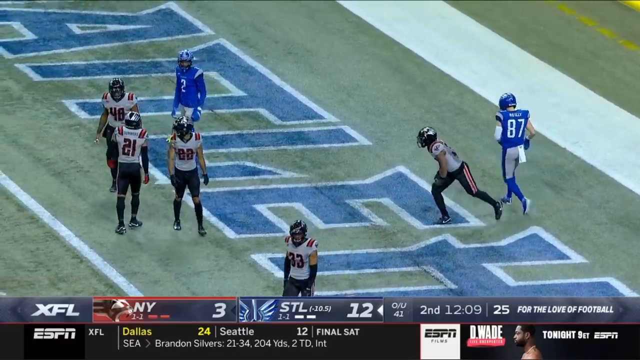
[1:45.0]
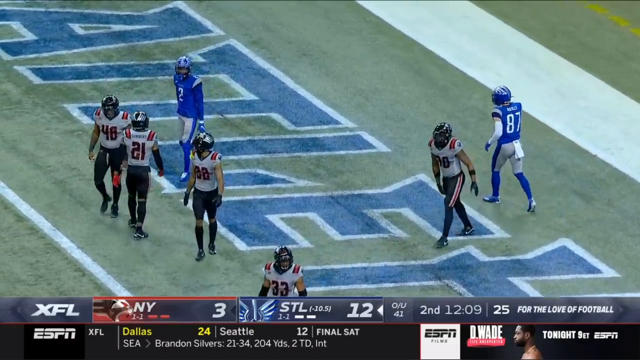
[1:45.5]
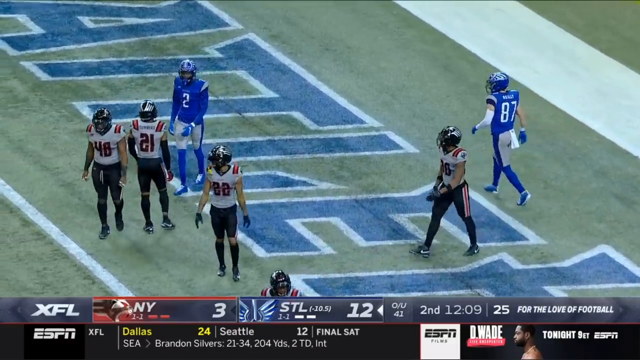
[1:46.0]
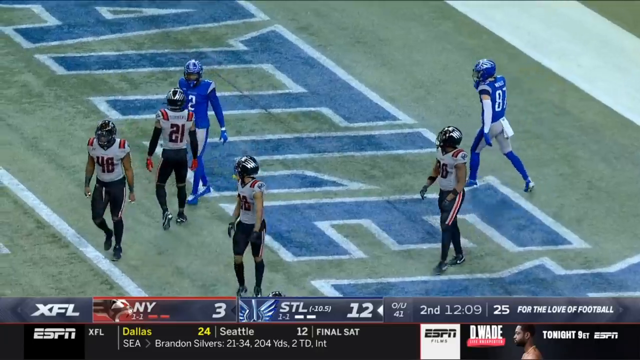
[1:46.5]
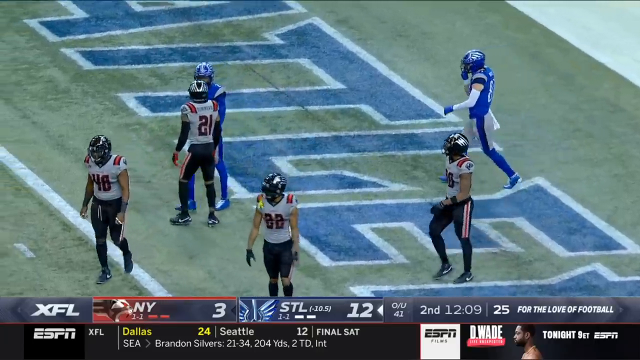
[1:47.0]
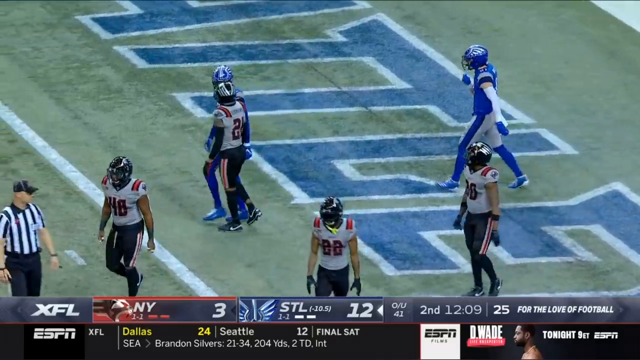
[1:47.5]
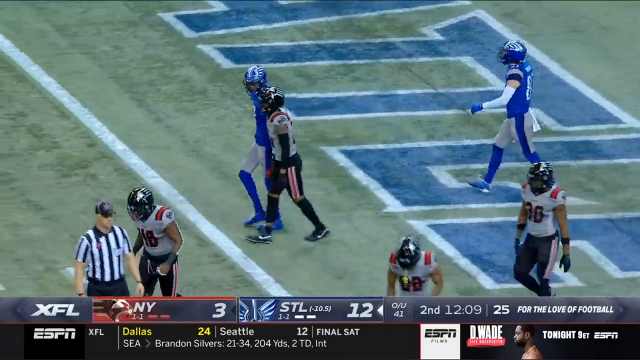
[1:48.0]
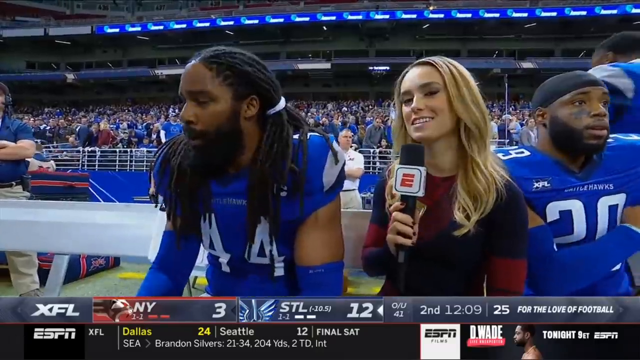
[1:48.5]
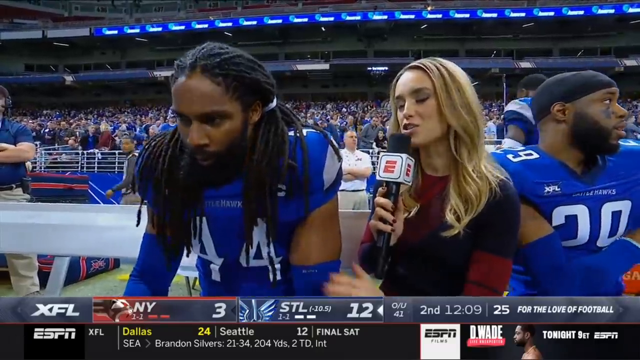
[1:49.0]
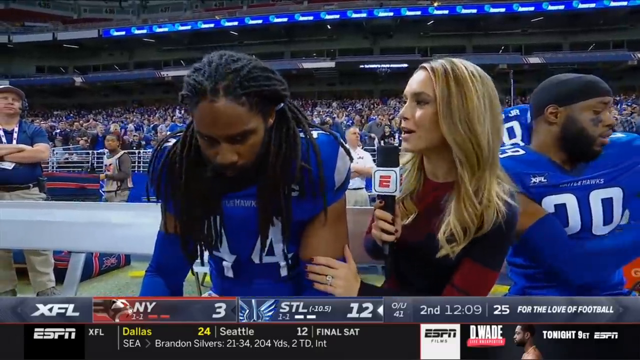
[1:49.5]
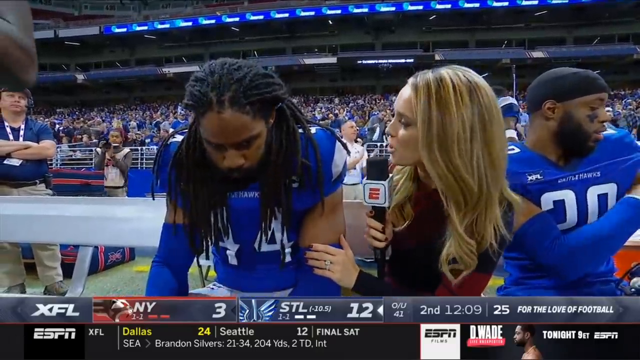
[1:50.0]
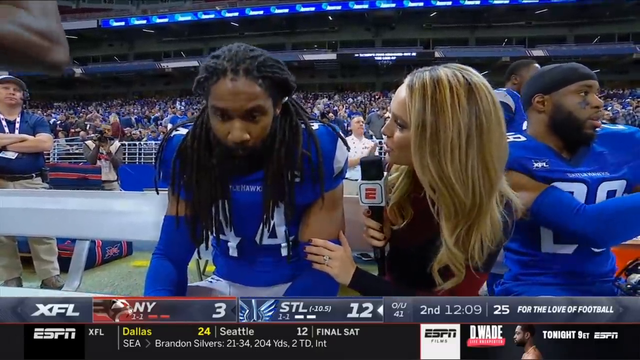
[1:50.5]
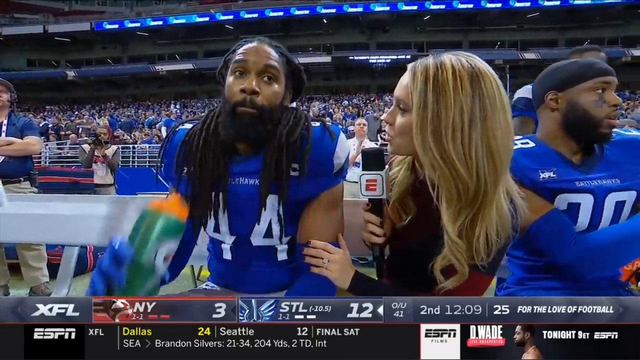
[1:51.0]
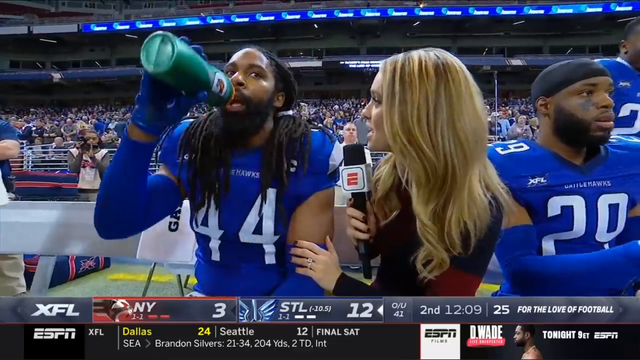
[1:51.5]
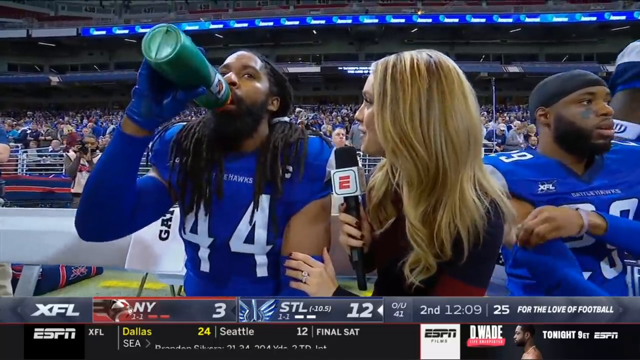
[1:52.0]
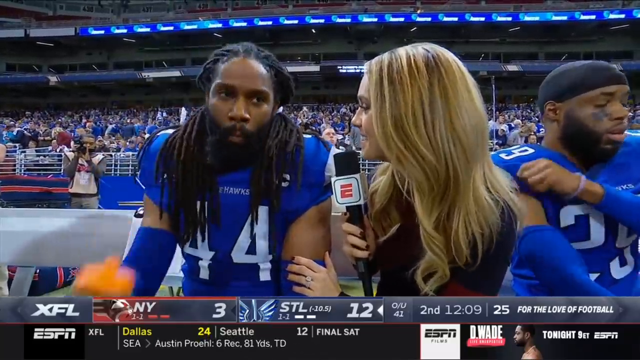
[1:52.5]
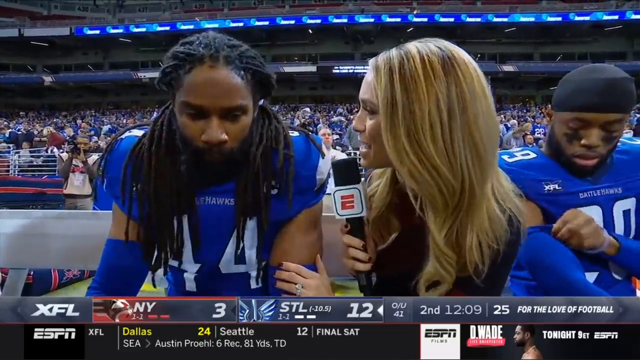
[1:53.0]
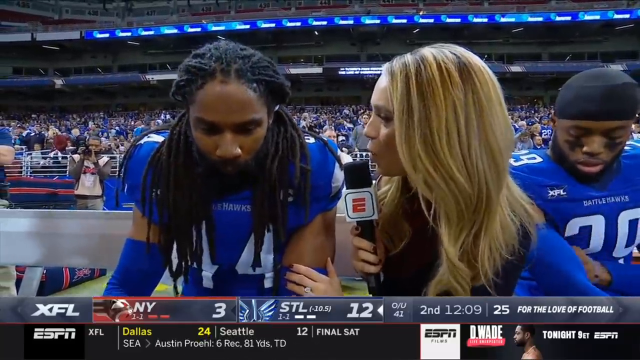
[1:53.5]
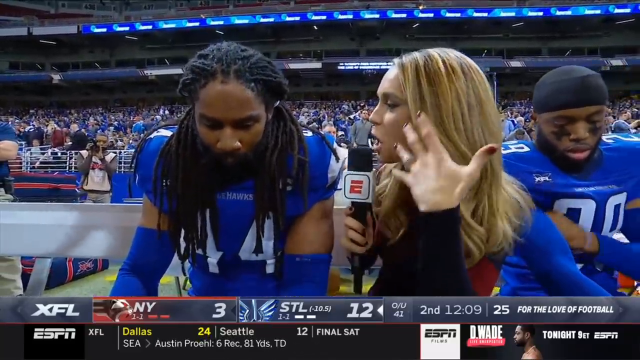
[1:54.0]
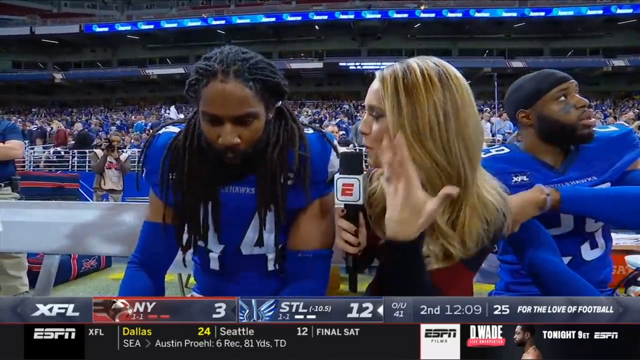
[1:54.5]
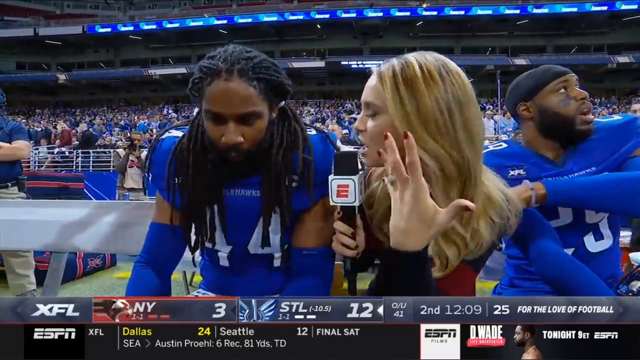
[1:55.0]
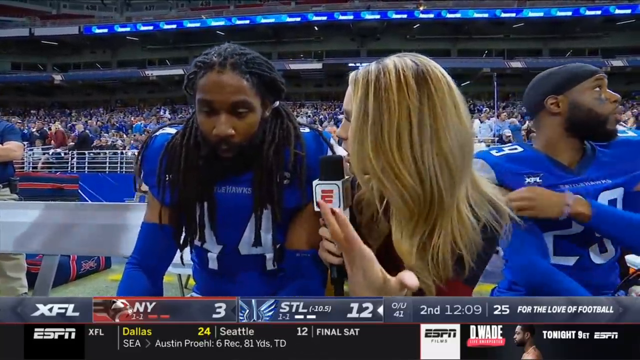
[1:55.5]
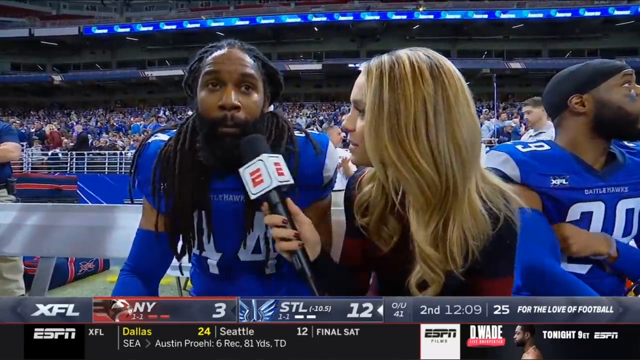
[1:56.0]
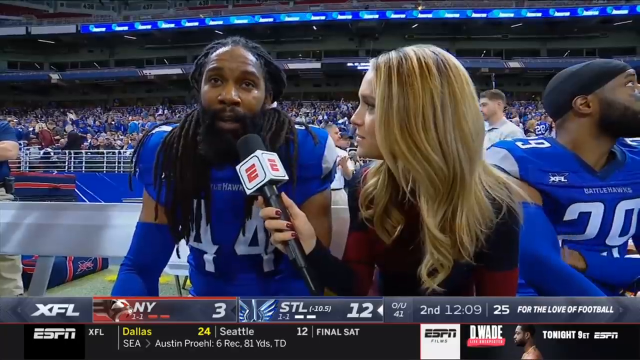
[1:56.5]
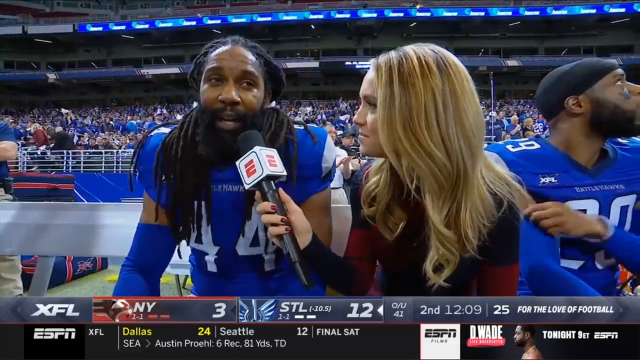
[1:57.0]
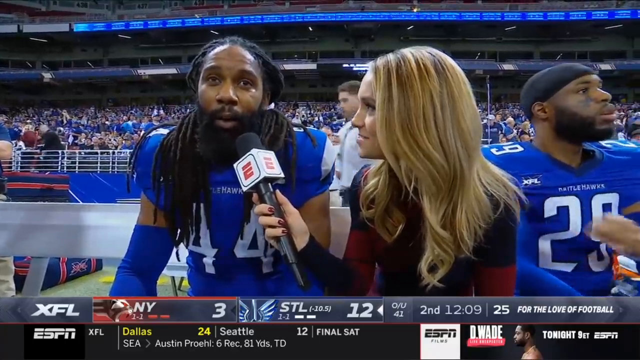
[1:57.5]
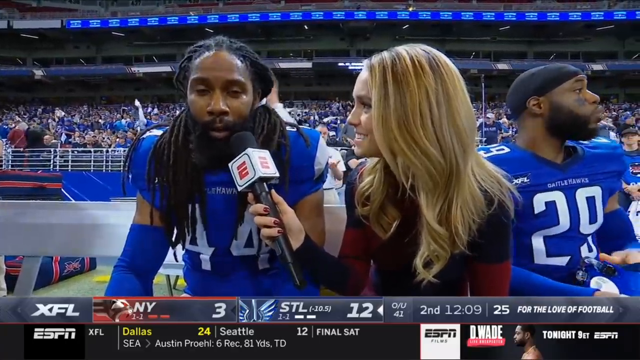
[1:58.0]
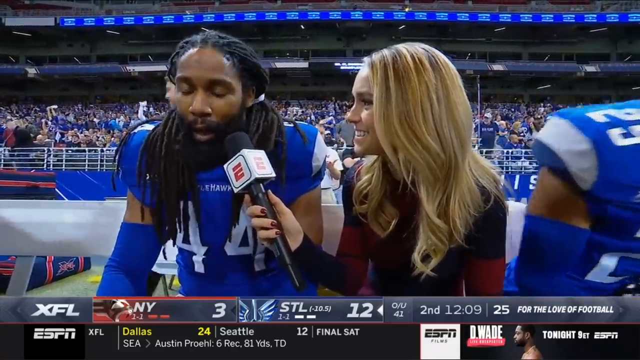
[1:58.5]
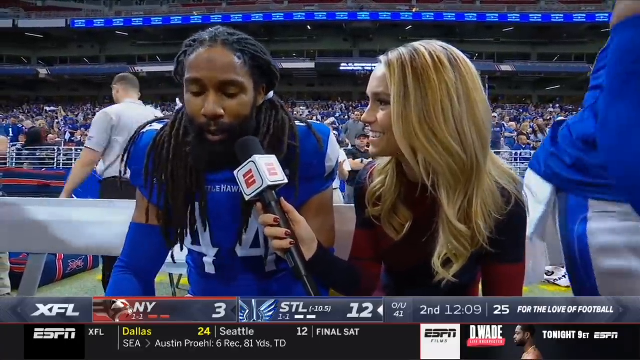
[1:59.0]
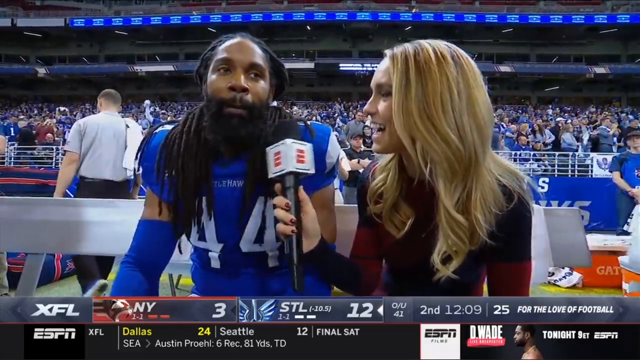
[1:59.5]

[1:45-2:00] An XFL game begins with the team in black, white and red kicking off. The blue and white team, which looks like the Battle Hawks, catches the ball, and a player throws it to another, who runs for a touchdown and scores. The players cheer and jump all over each other, the fans cheer, and fans in hawk outfits cheer in the stands. A sportscaster is shown up in the box of the stadium. The screen splits to show a referee in a black and white striped shirt with the number 81, pointing and talking and then throwing his right arm down. The Battle Hawks go for extra points and miss. The player who scored is interviewed by a lady from ESPN, and "XFL ESPN" appears on the screen. A replay of the touchdown follows and goes into slow motion, ending the video.